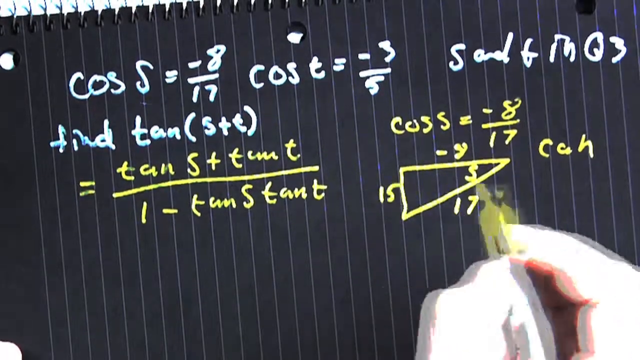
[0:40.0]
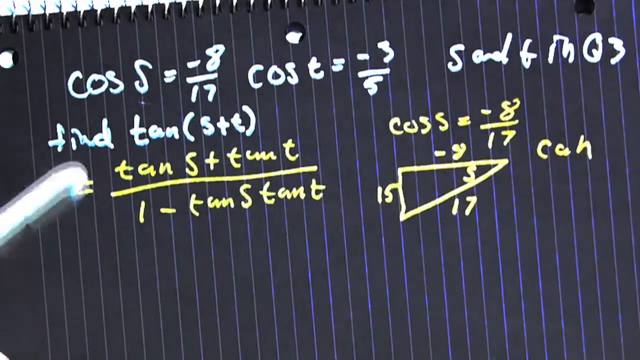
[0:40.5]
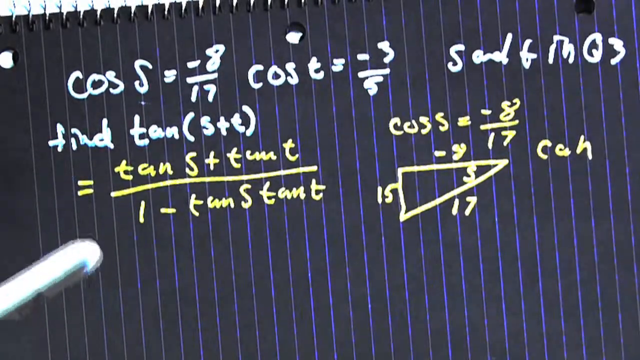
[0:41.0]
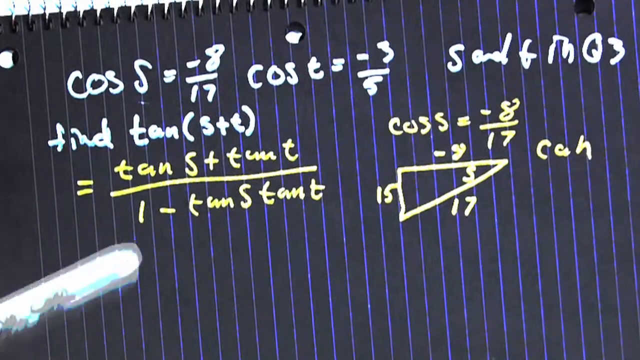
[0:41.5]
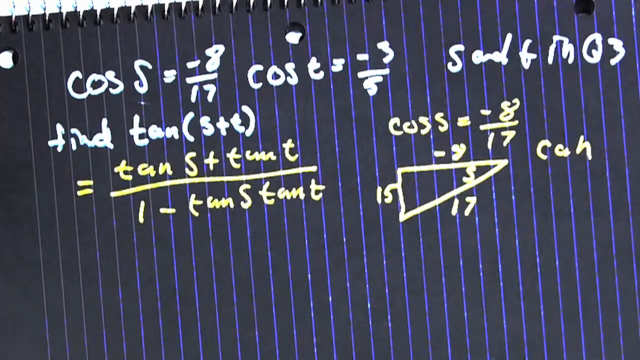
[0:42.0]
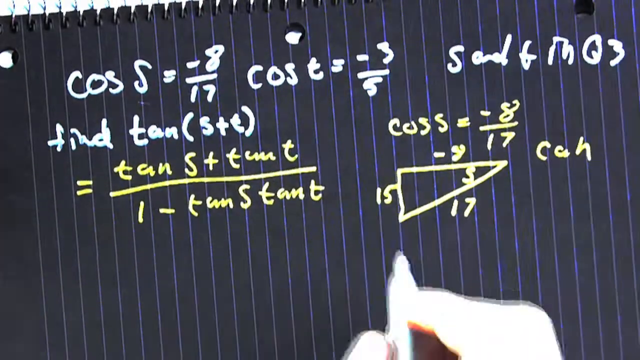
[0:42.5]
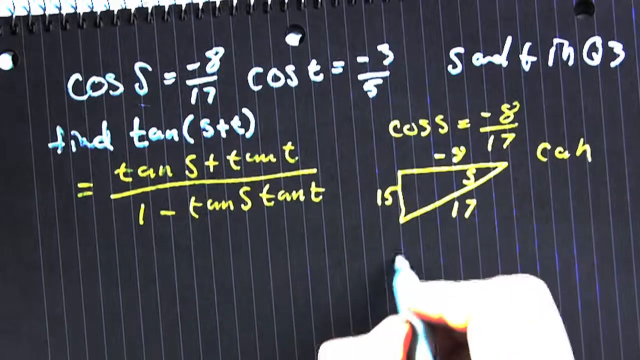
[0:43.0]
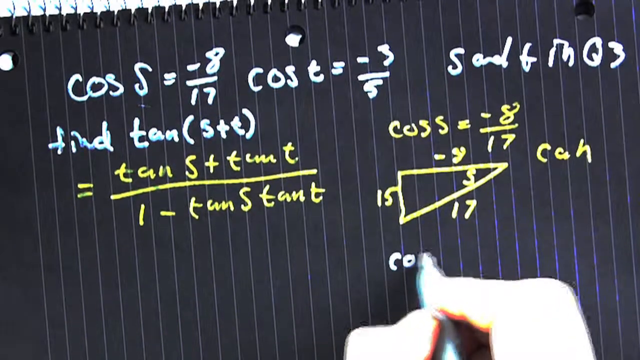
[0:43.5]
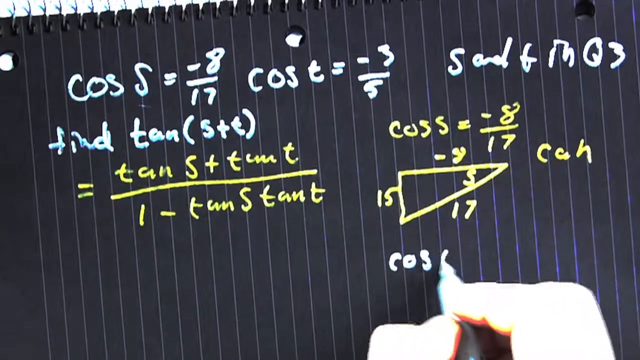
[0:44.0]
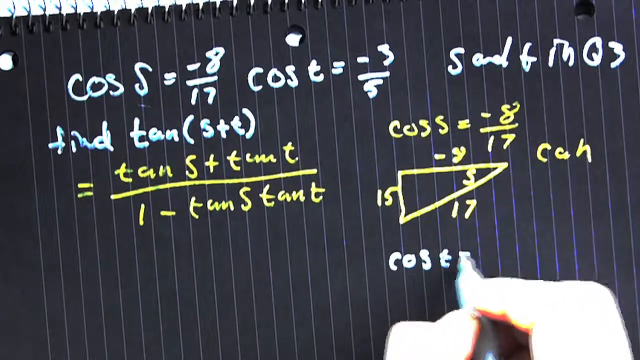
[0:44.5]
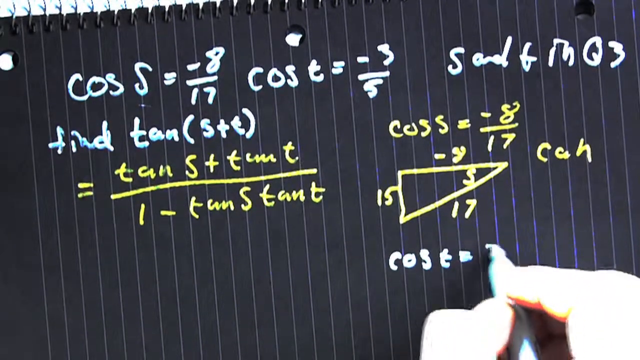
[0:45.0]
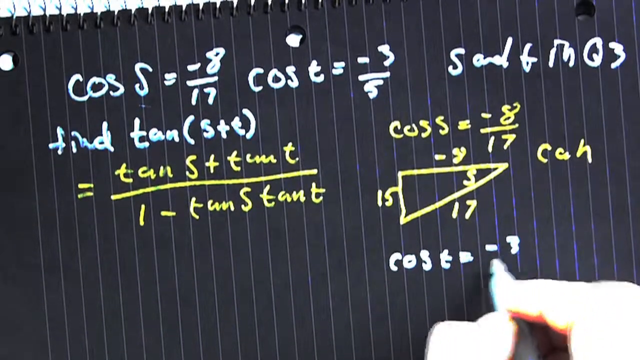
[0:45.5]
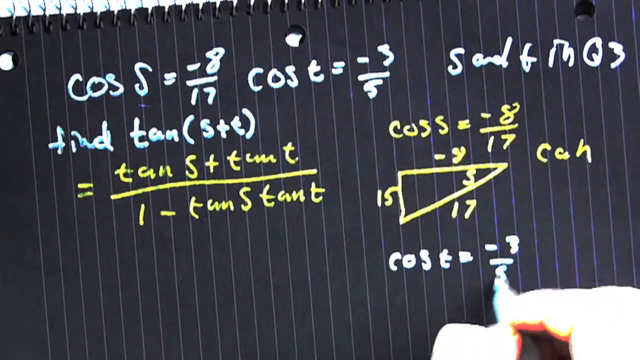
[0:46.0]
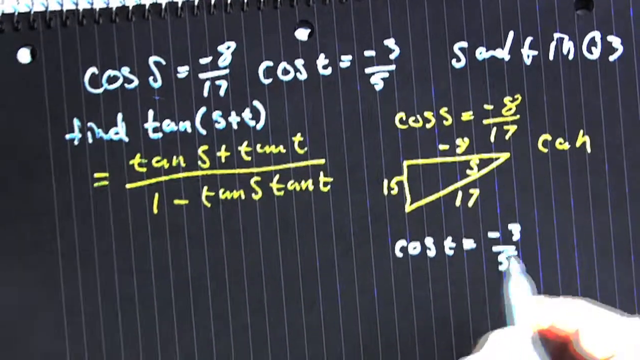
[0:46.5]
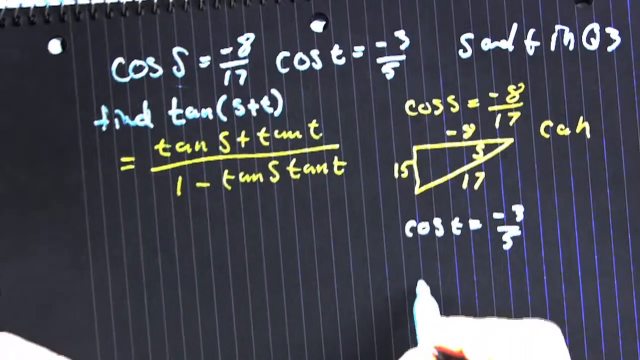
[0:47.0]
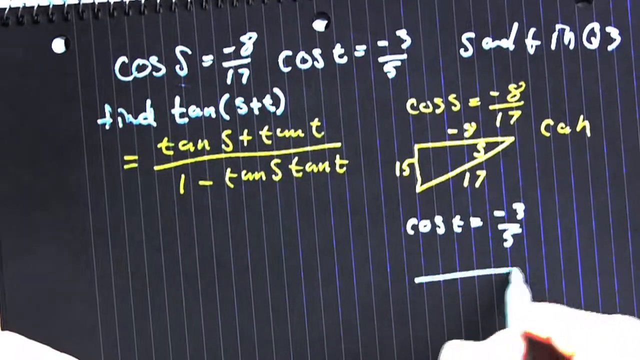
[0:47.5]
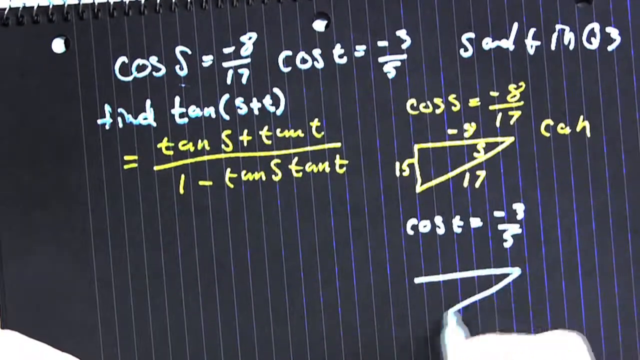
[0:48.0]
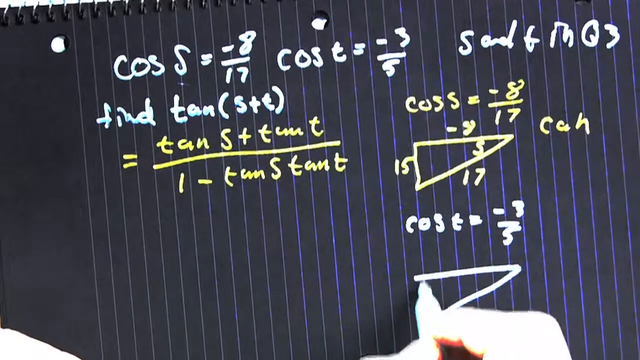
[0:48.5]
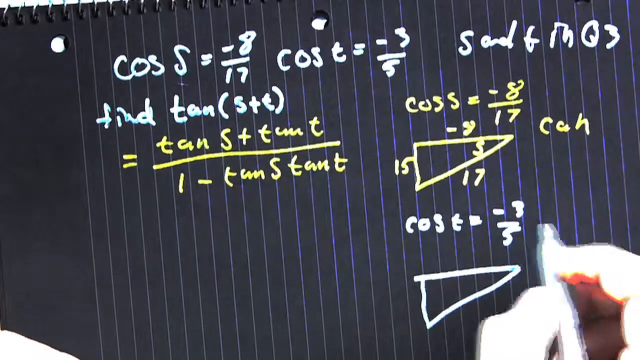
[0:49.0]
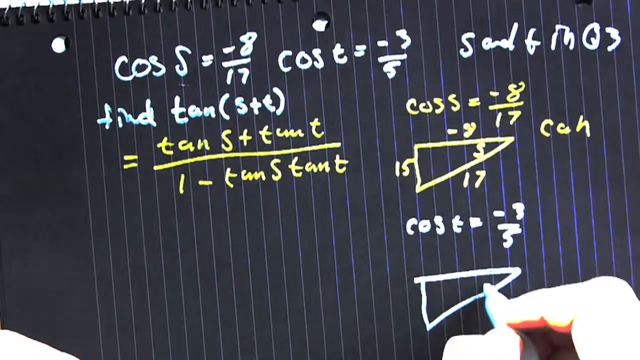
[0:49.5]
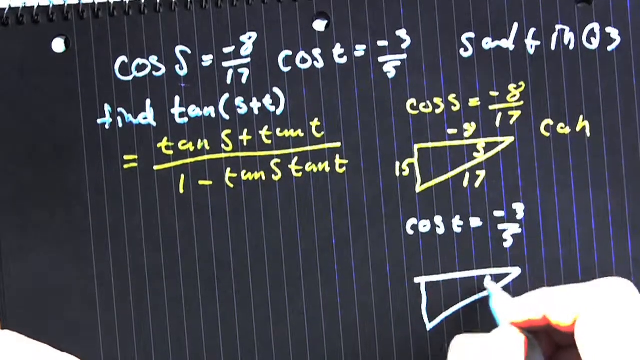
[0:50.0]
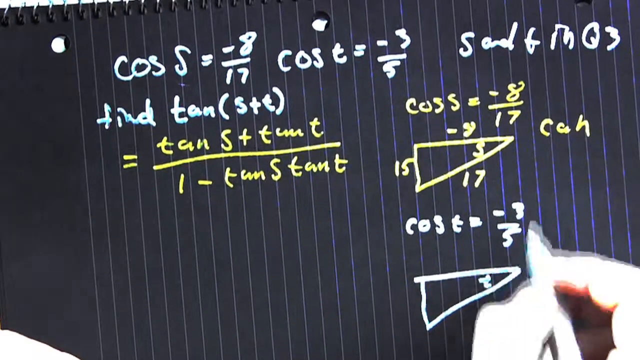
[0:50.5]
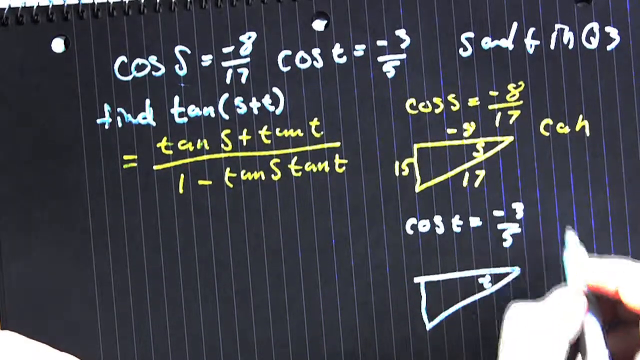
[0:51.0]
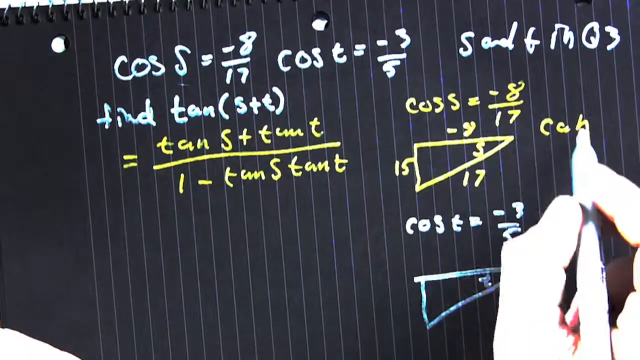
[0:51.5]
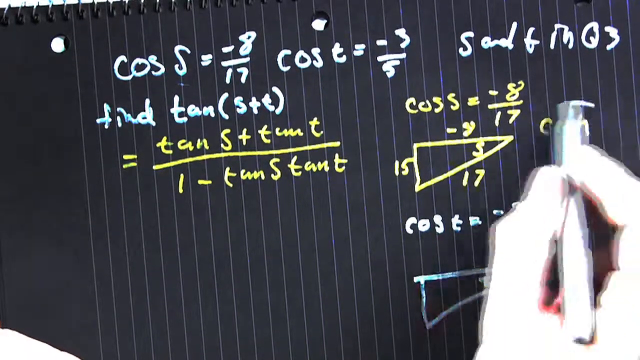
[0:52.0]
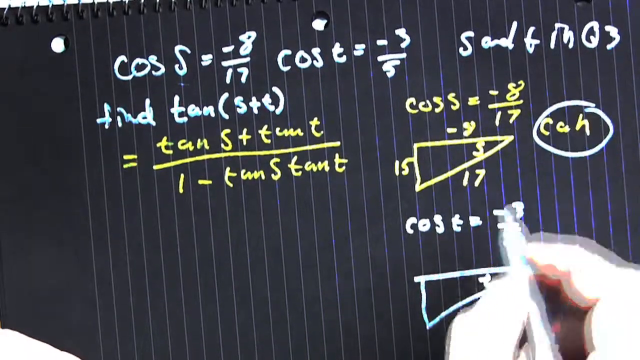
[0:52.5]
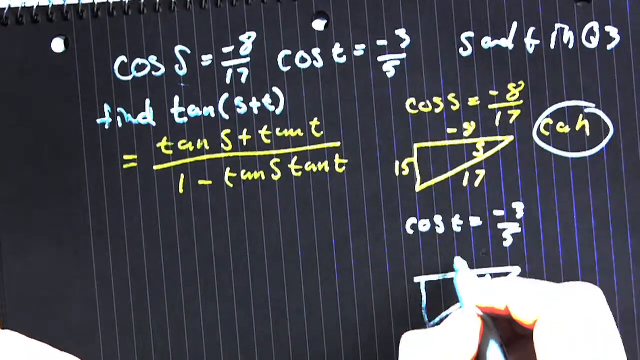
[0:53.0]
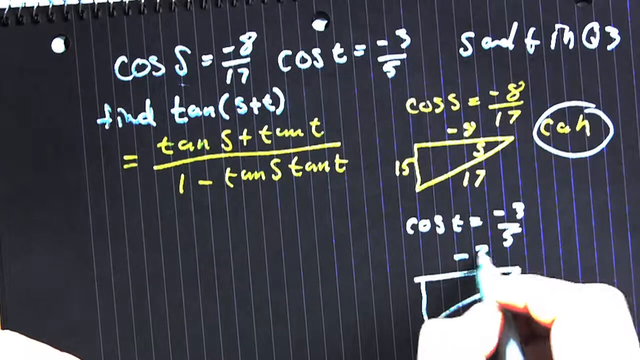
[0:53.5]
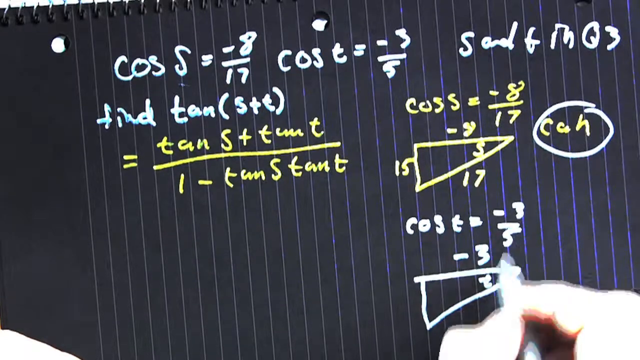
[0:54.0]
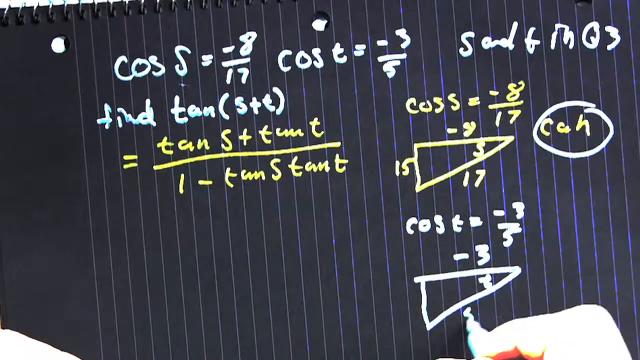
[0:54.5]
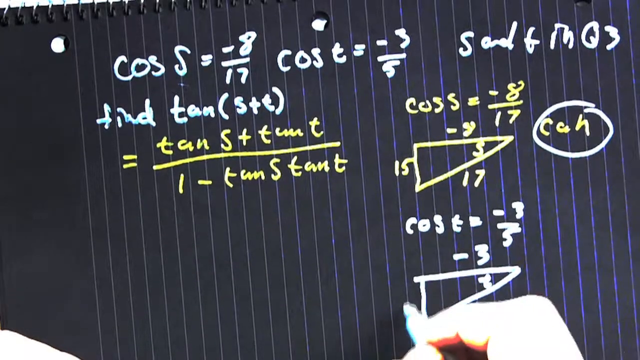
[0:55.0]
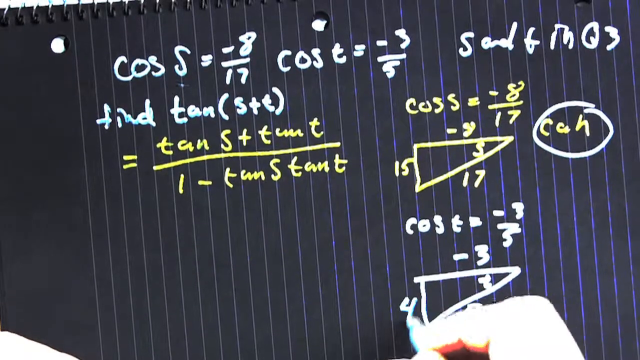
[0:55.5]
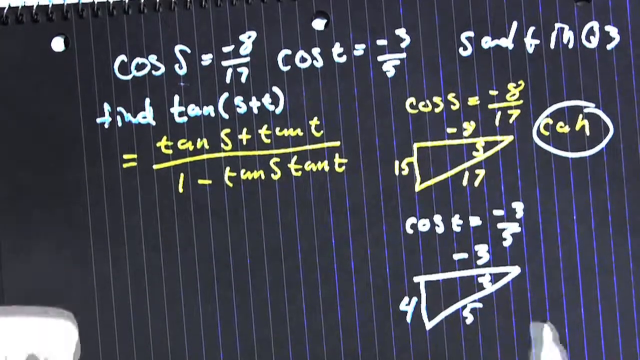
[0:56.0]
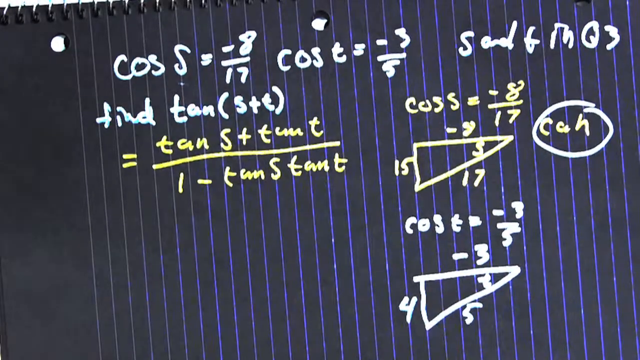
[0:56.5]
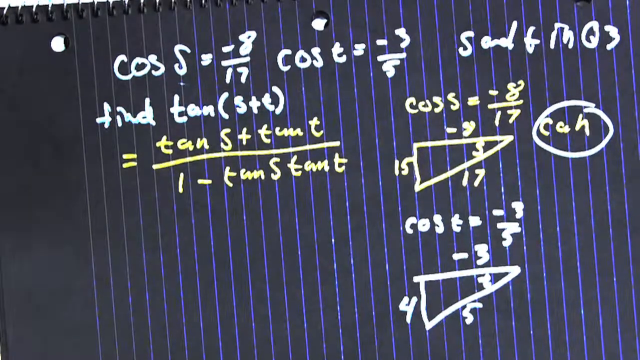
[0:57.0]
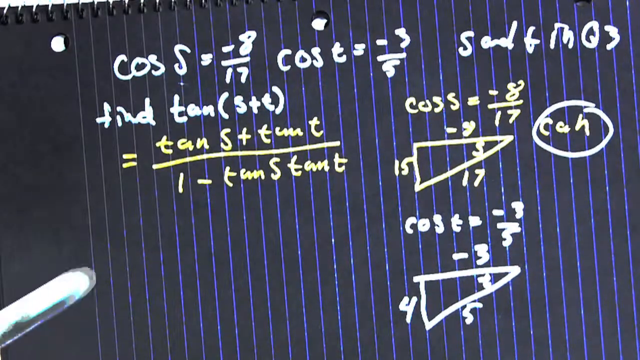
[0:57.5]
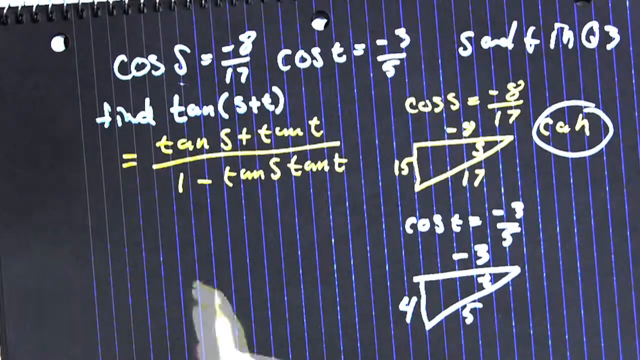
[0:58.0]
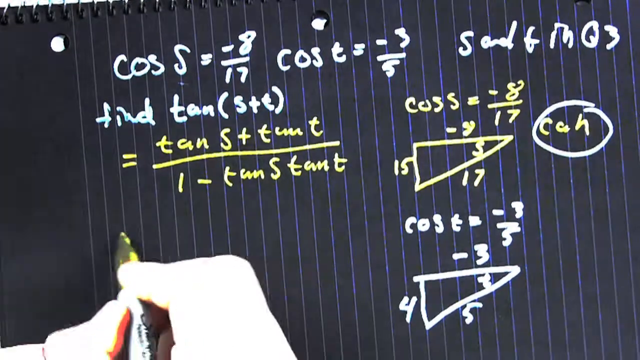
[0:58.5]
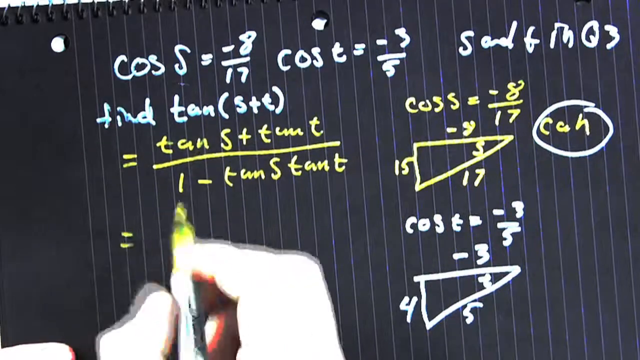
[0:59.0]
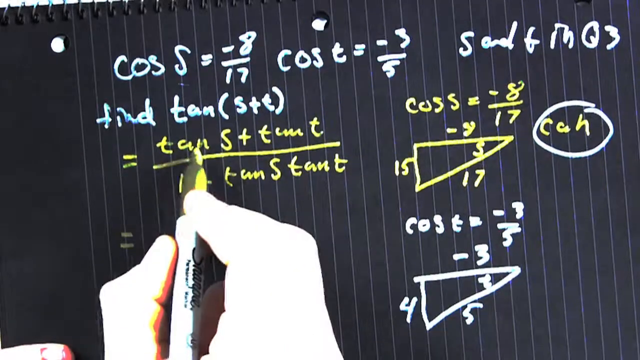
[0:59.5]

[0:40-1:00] The man finishes drawing the triangle with its details and moves on to cosine T, which is minus 3 to 5. He draws another triangle, this time with a white marker, and writes data from cosine T on it: the numbers minus 3, minus 5 and 4. The same yellow and white markers are used, and he writes on the same black sheet of paper, on which the letters and numbers are clearly visible.